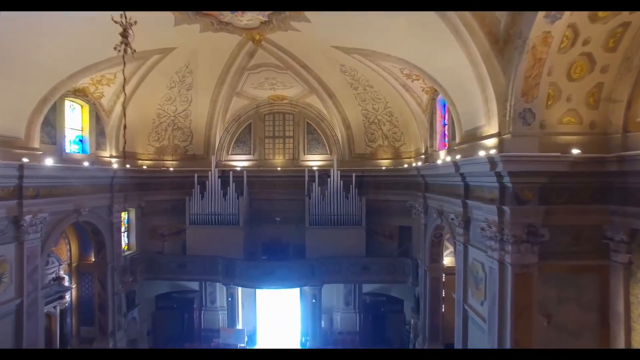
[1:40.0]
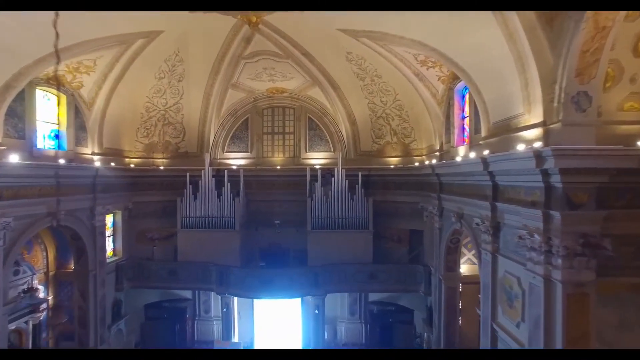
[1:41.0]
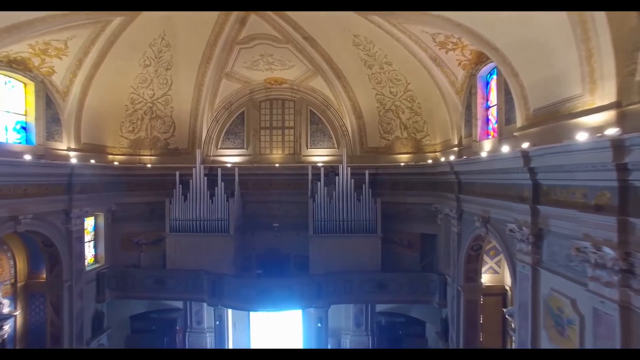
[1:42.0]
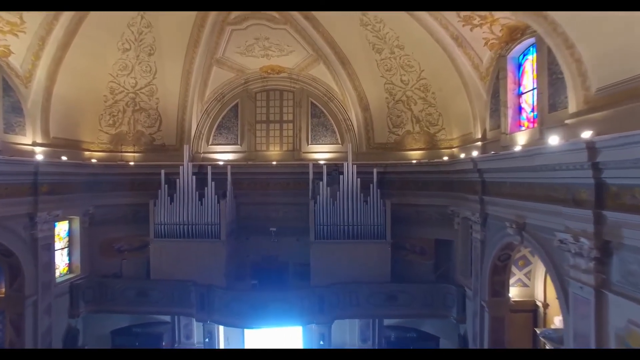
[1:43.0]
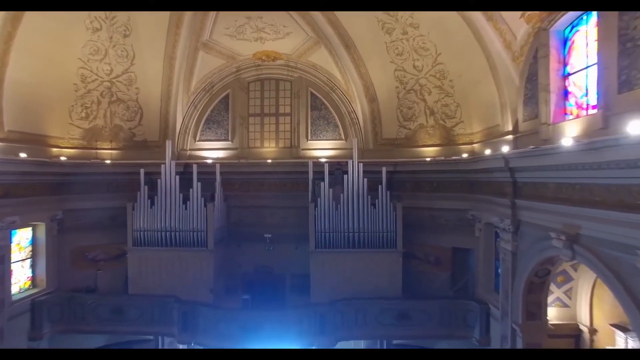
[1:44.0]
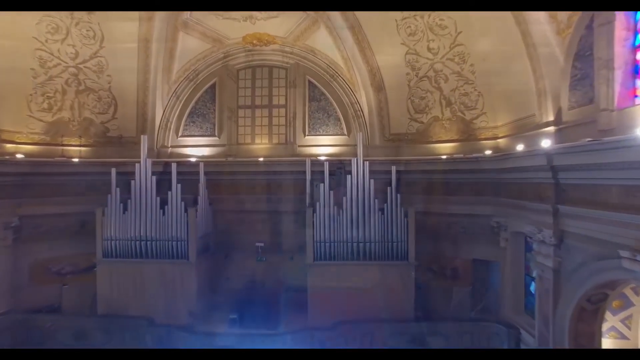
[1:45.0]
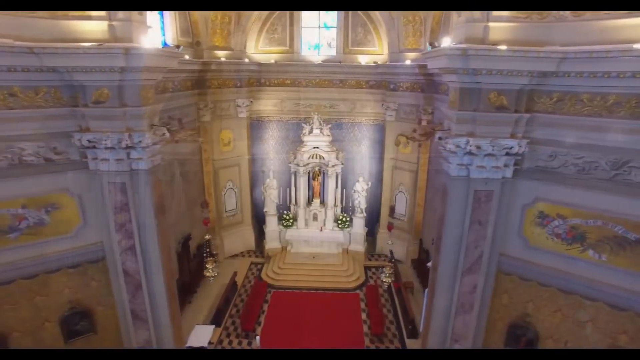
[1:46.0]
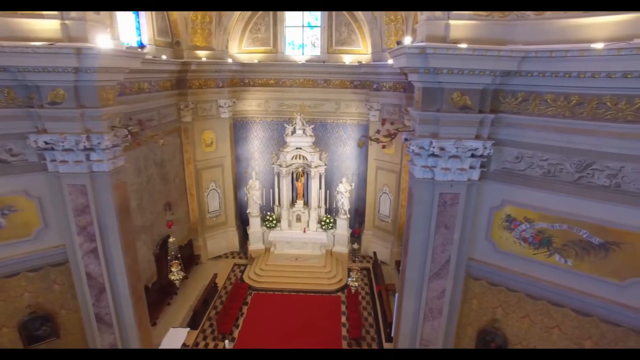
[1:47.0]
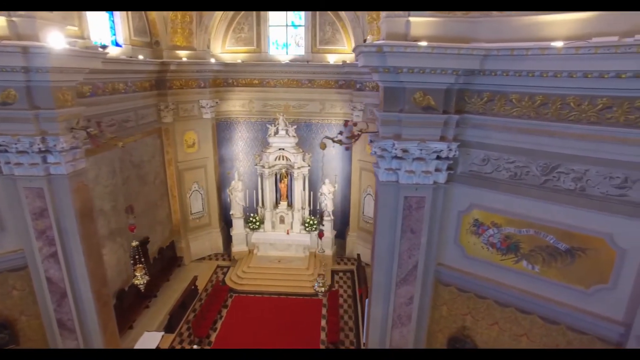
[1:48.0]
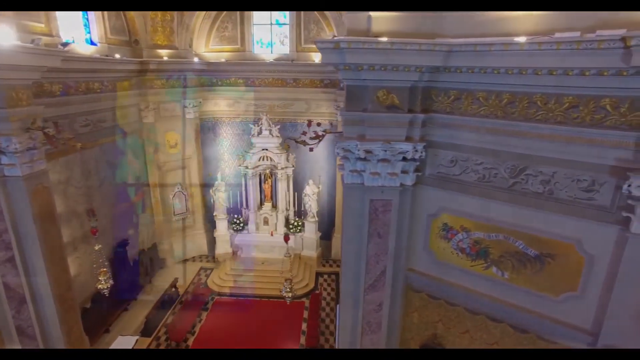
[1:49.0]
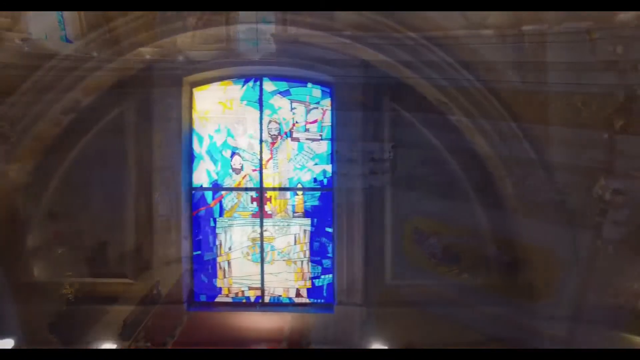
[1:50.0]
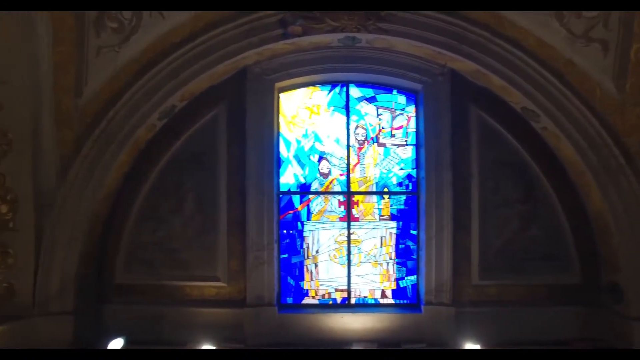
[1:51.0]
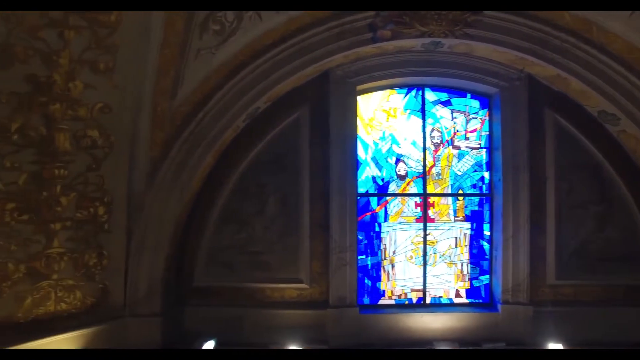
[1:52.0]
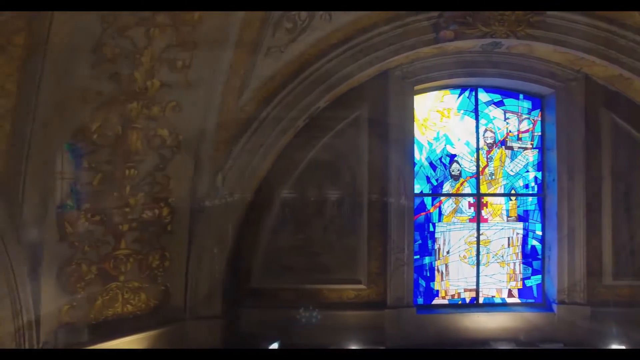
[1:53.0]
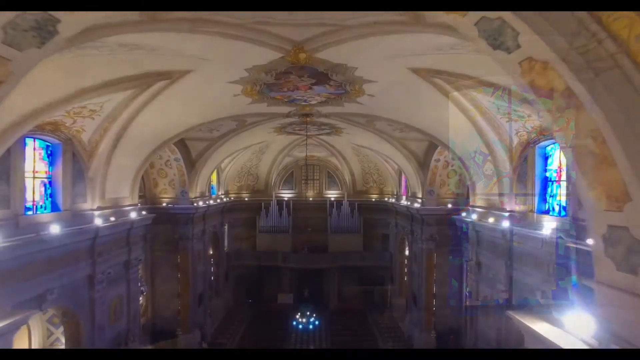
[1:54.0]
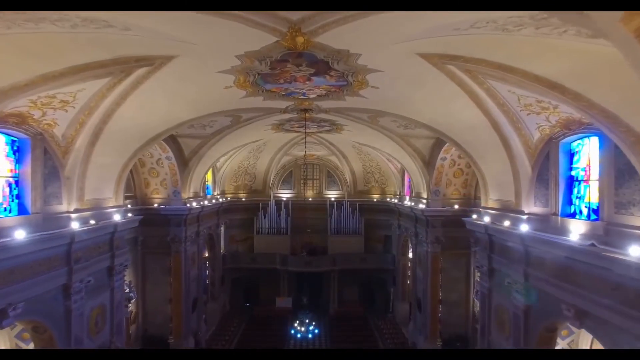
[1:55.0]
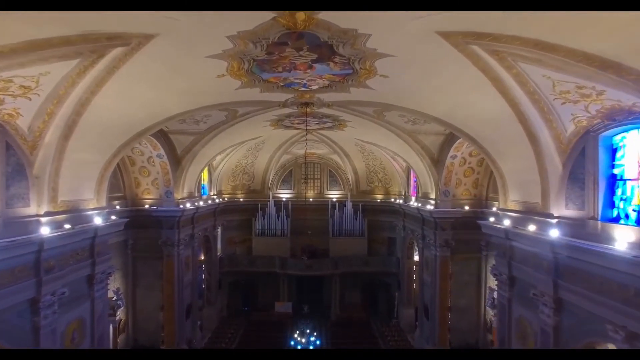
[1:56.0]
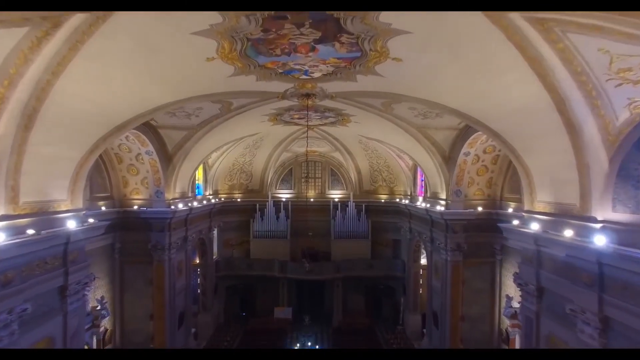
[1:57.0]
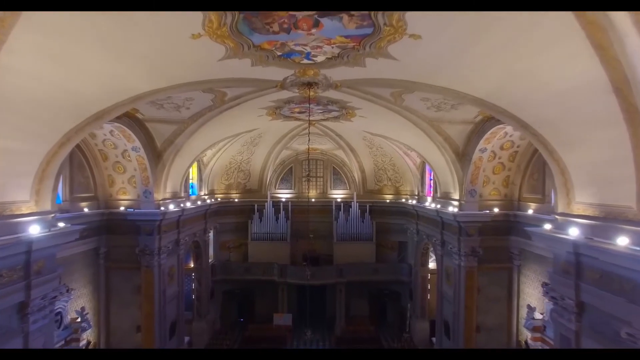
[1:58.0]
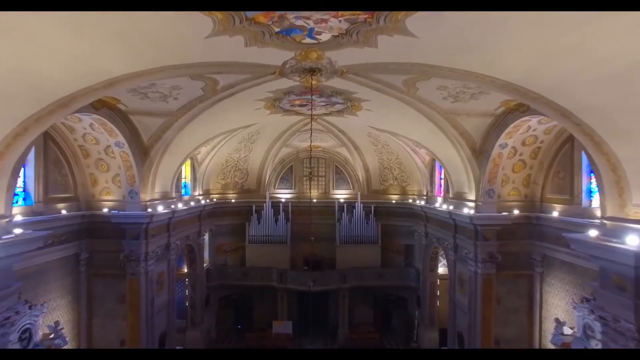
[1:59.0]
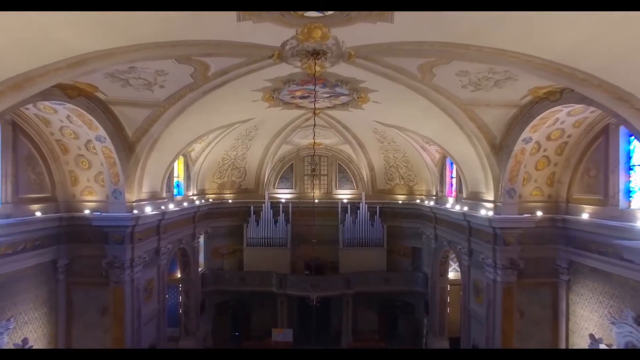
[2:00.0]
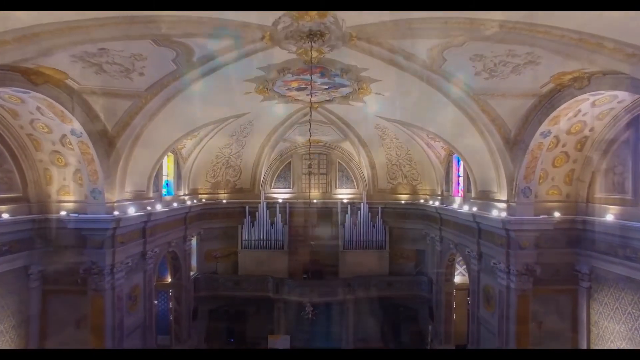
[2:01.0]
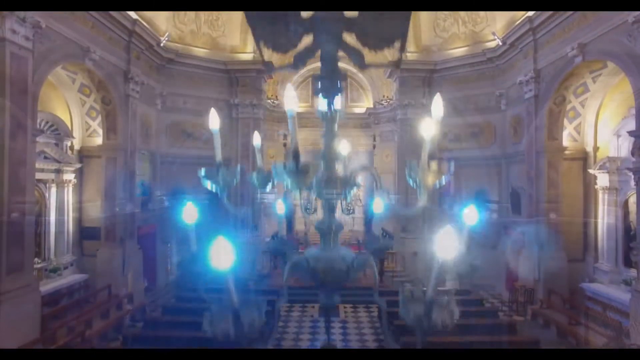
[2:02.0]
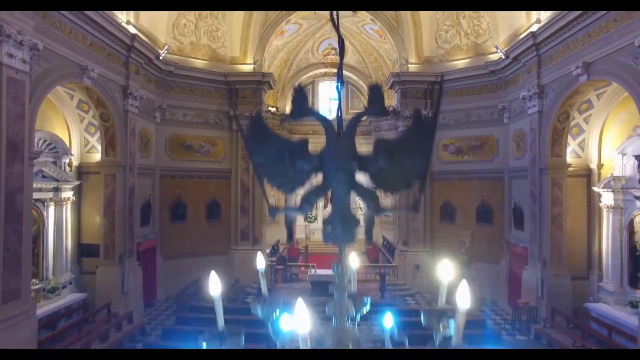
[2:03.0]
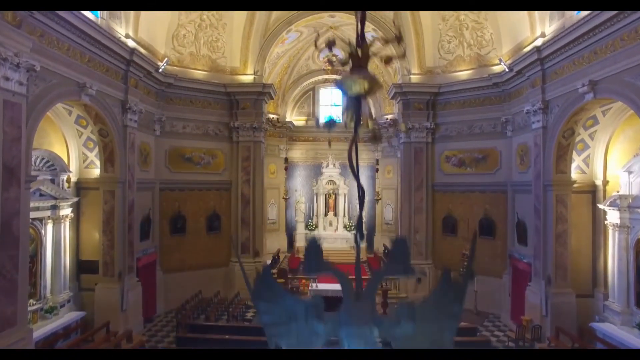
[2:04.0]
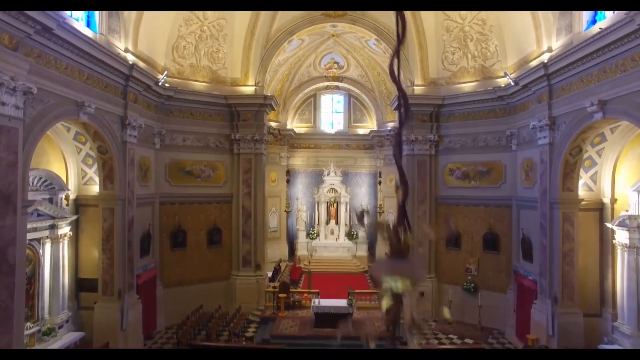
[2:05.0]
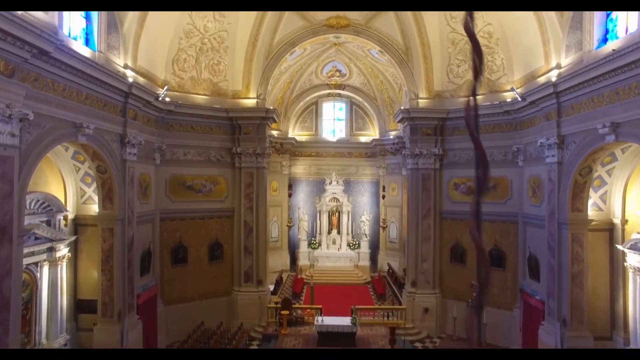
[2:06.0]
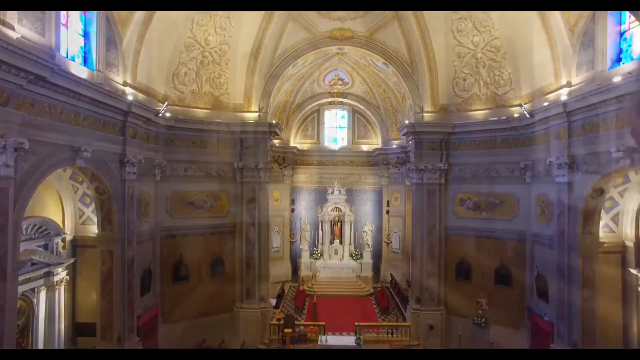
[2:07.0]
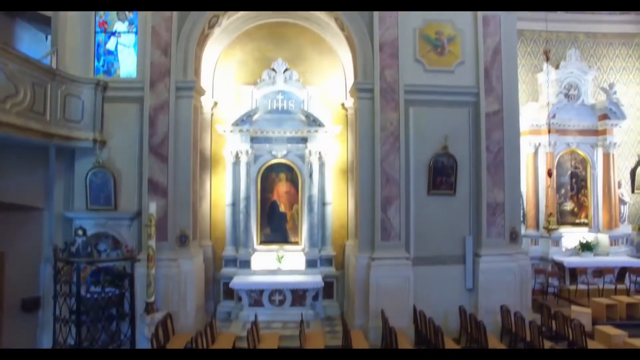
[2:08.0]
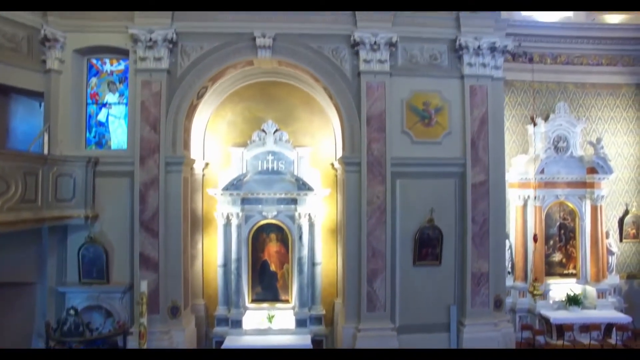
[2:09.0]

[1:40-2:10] The camera looks toward the ceiling at beige panels between the vaults, with the pipes of the pipe organ at the back centre of the frame and a chandelier hanging from the ceiling toward the left. It zooms in and rapidly back out to the Virgin Mary in her alcove in the altarpiece, then flicks rapidly to a stained glass window on the upper level, mostly blue, dark blue with a lighter touch, that looks like it shows two figures but is quite abstract and hard to make out. After another rapid flick, the camera zooms along the vault work of the ceiling, pale cream stone or plaster work with detailing between, and a chandelier hanging from the ceiling with a double-headed eagle motif above it. The camera heads up to the ceiling, zooming around and moving giddily from scene to scene.